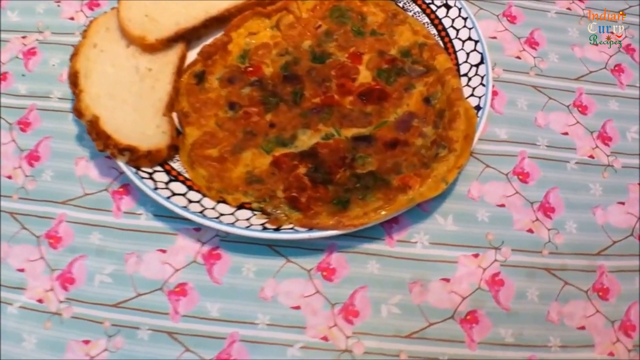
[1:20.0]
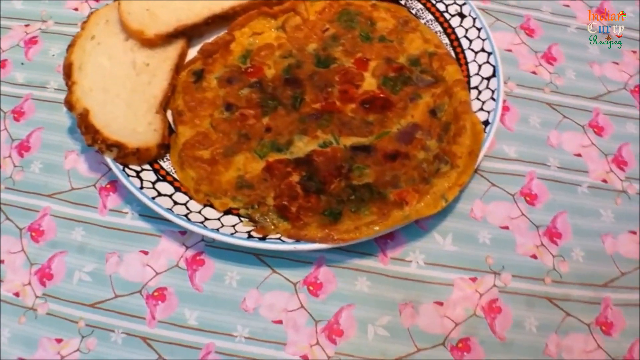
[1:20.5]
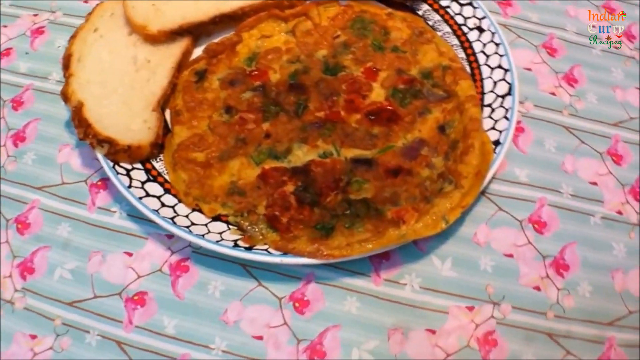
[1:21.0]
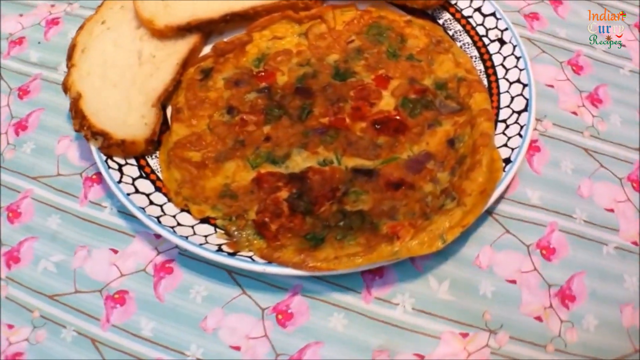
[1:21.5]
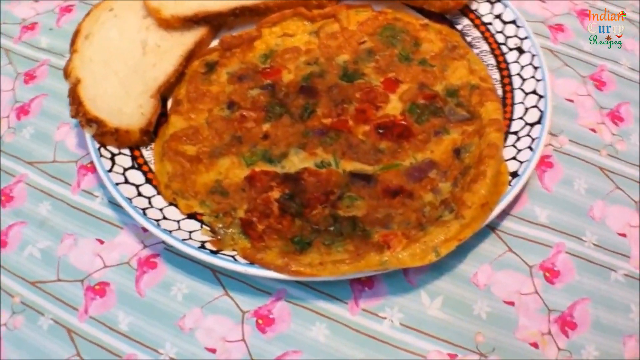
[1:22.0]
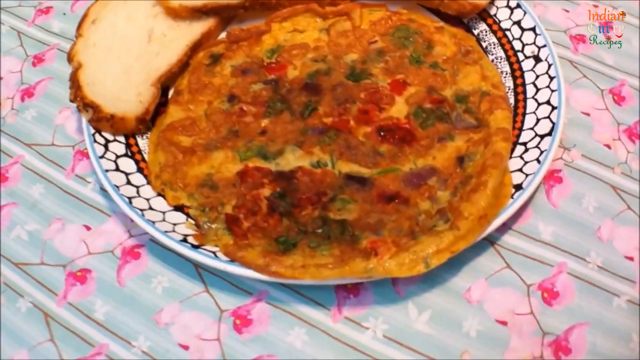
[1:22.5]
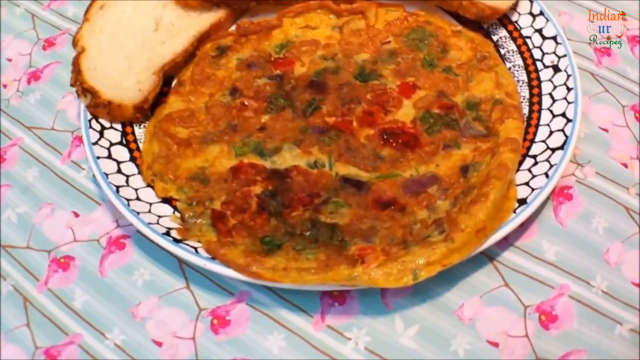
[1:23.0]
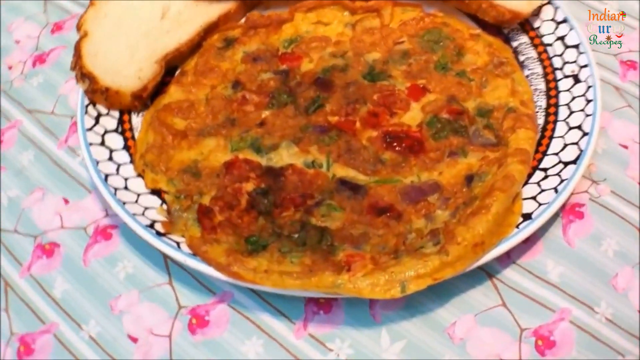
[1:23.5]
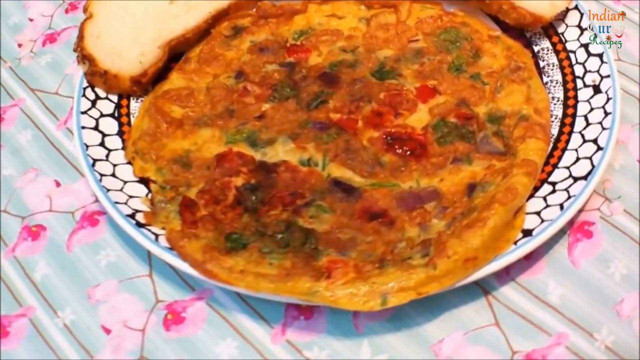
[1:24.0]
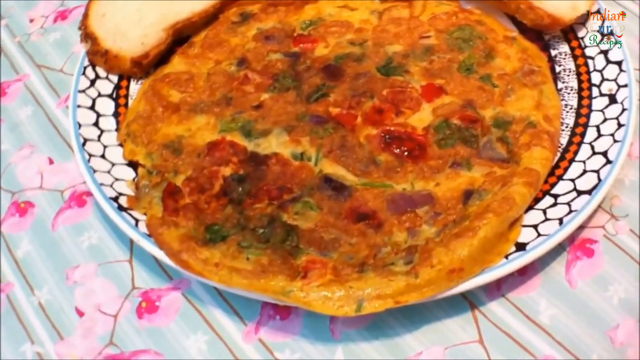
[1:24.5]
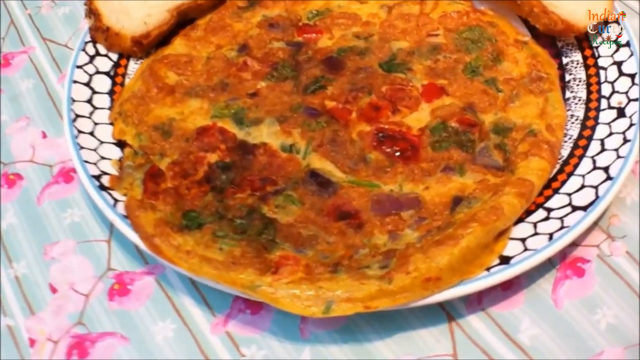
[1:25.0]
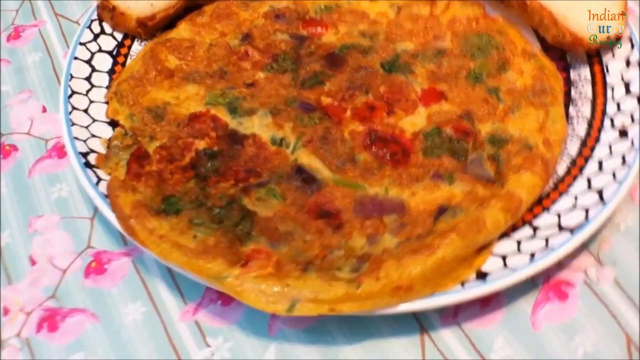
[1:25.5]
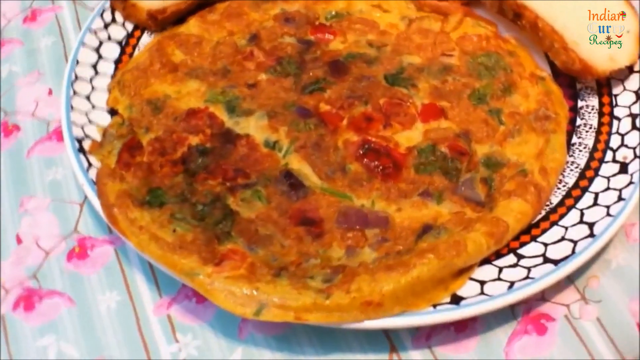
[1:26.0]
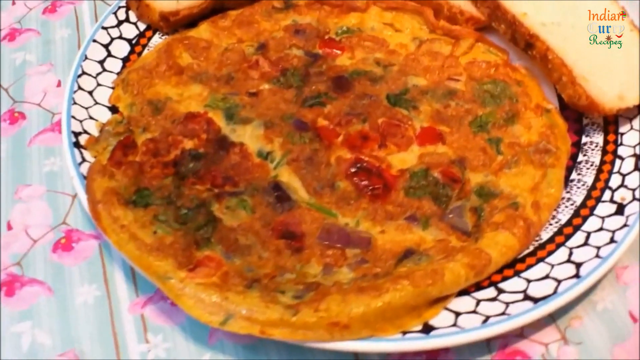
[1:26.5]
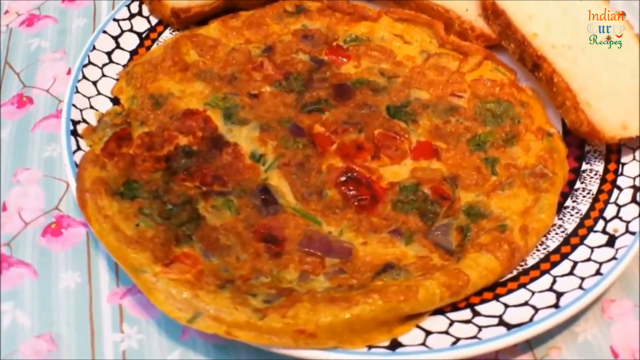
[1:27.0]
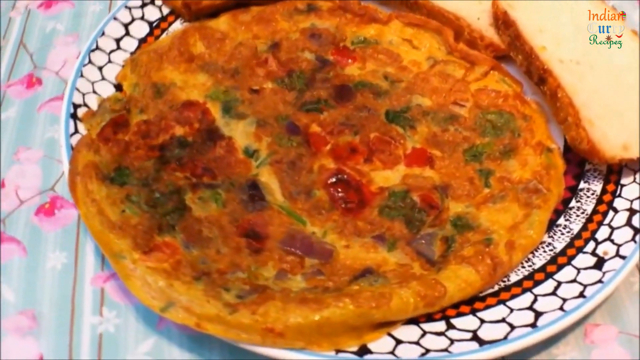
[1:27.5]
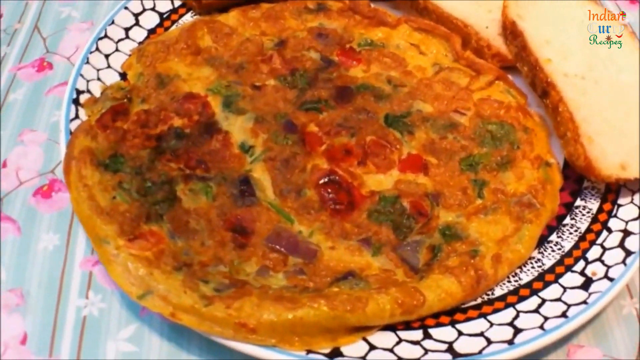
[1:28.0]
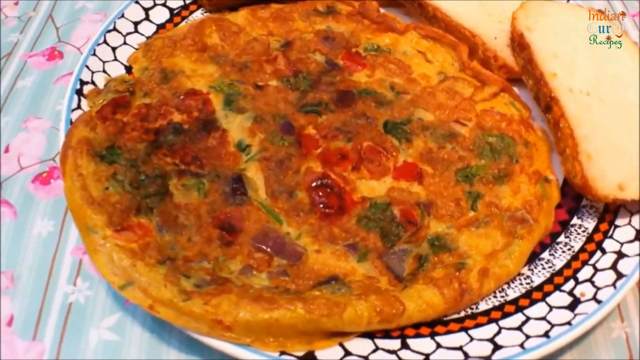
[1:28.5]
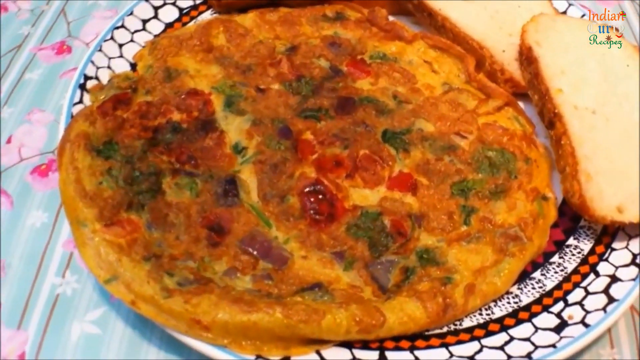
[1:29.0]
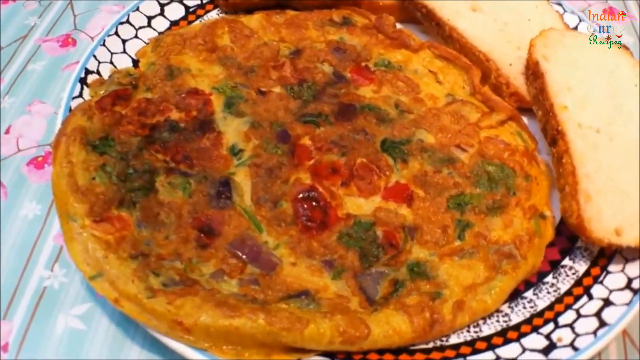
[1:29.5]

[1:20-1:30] The camera pans around a masala omelette on a plate. The omelette has many ingredients: tomato, egg yolk, basil, apparently some chives or onions, and apparently some sugar. It is completely cooked and is in the center of the plate. Three slices of bread are on the outside of the plate; the bread is white with a brown crust on the edges, and each slice looks to be maybe half the length of the omelette. The plate has an octagonal design with black and blue lining and what look to be red dots circling the plate. The plate is on a table with a tablecloth that has a nature design: some stripes going up and down, but mostly twigs and tree branches with lots of leaves and petals, apparently white, purple and red petals. The cloth has a pink hue. The camera kind of goes around in a mini circle, displaying the egg and the bread on the plate.